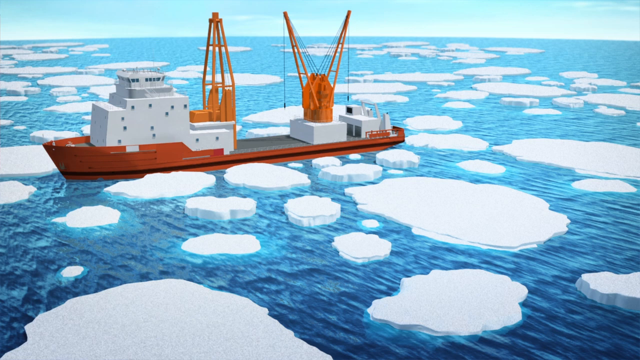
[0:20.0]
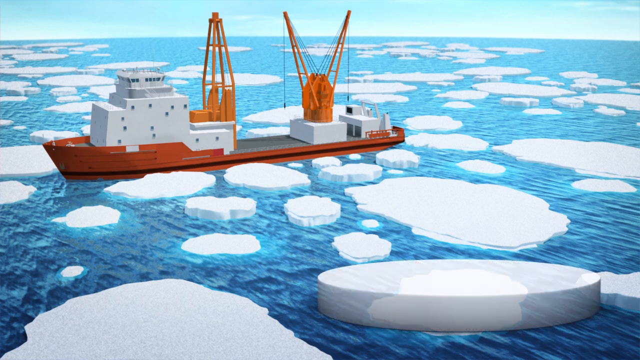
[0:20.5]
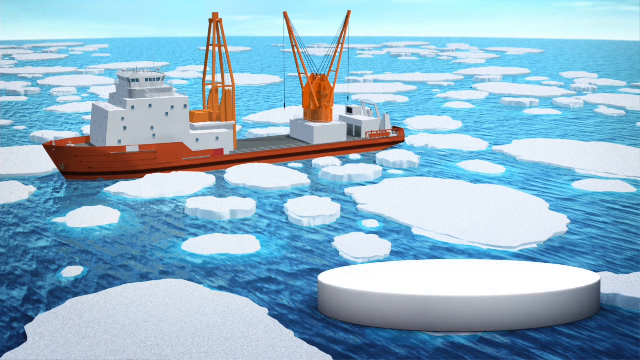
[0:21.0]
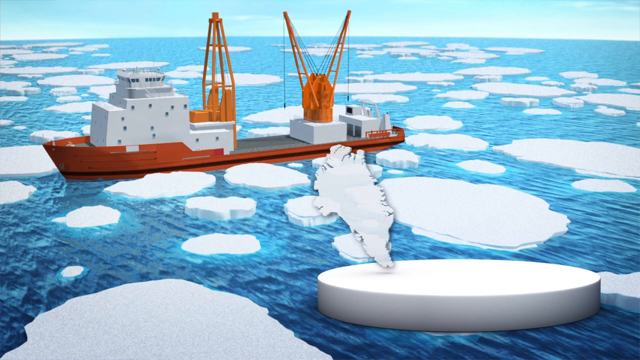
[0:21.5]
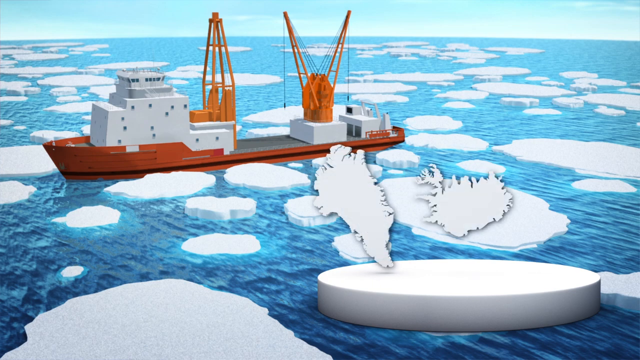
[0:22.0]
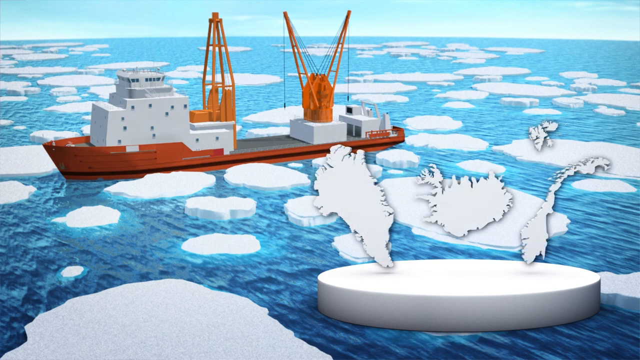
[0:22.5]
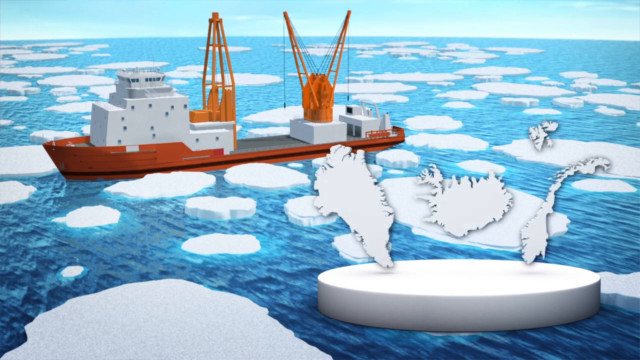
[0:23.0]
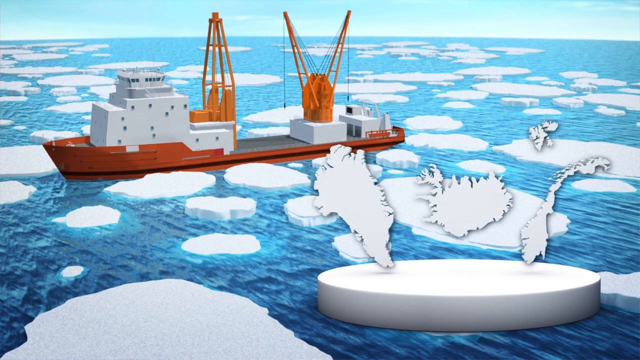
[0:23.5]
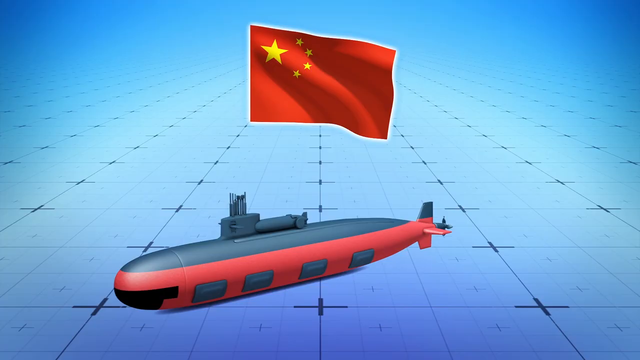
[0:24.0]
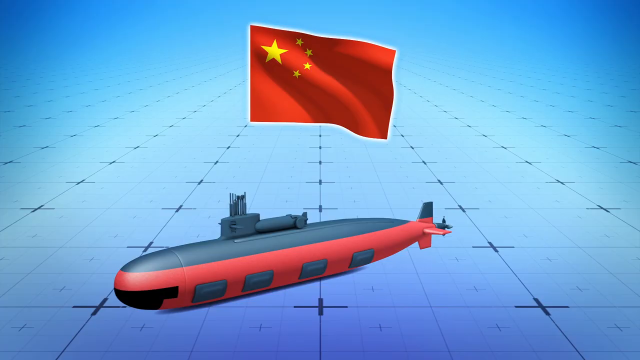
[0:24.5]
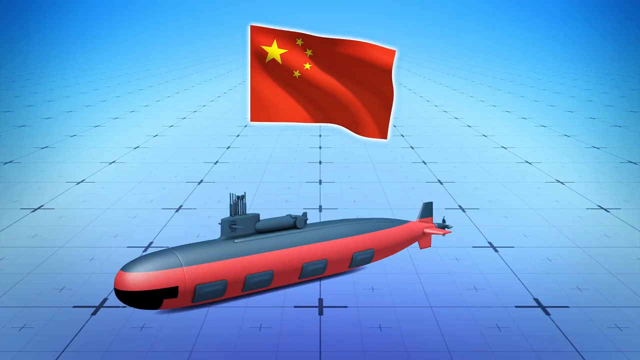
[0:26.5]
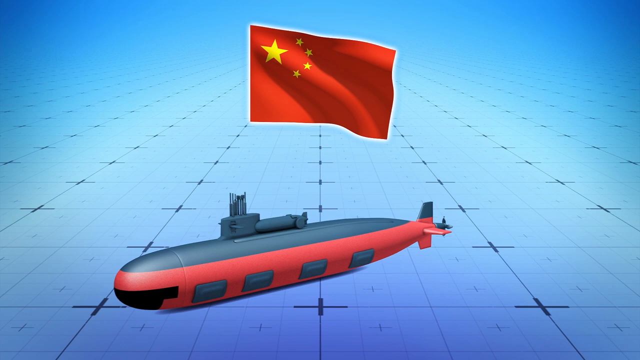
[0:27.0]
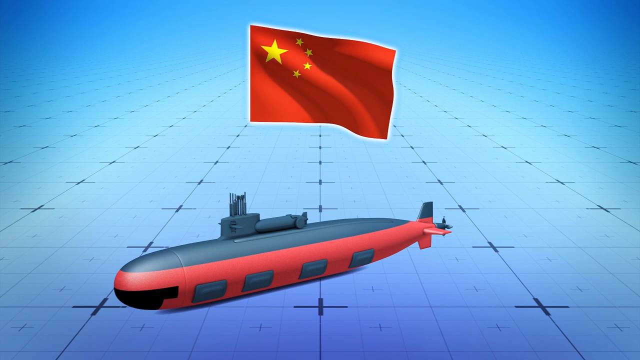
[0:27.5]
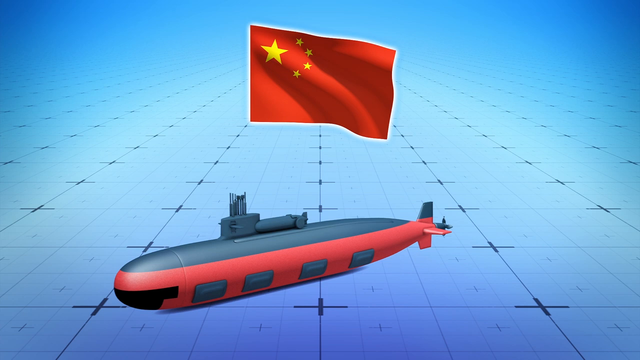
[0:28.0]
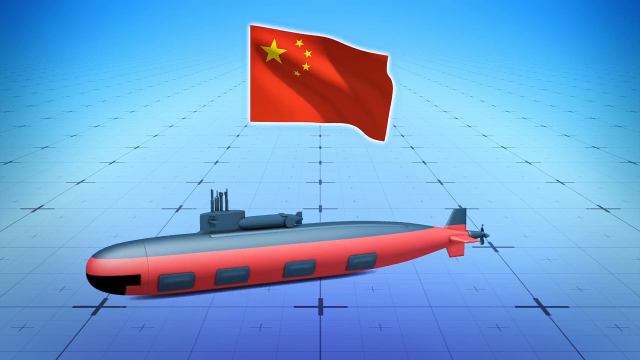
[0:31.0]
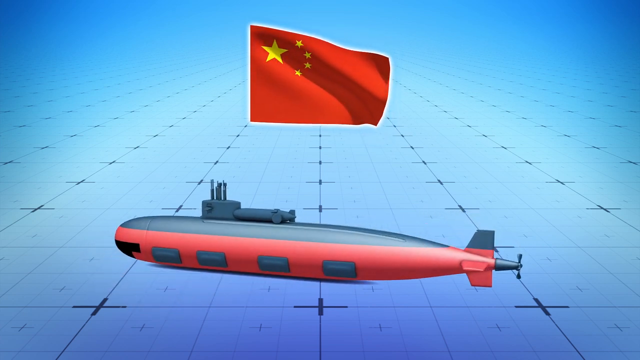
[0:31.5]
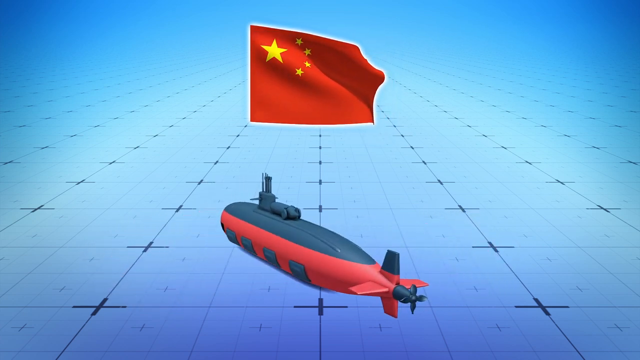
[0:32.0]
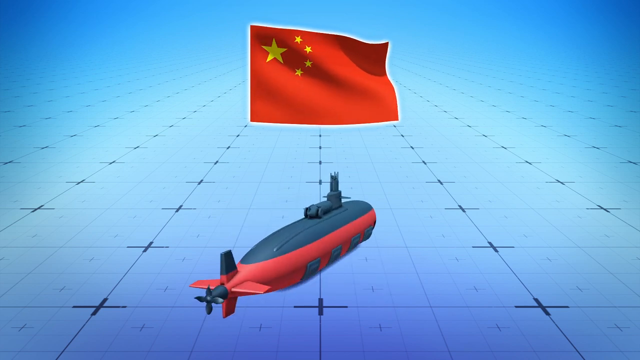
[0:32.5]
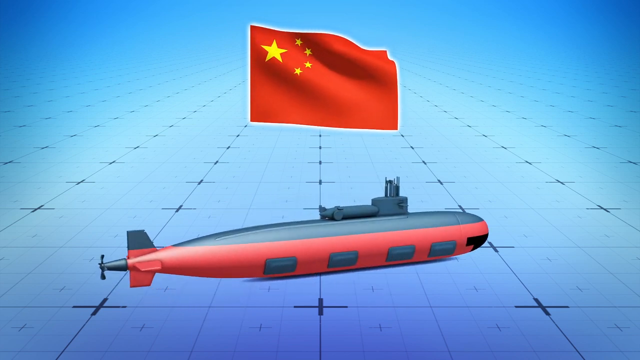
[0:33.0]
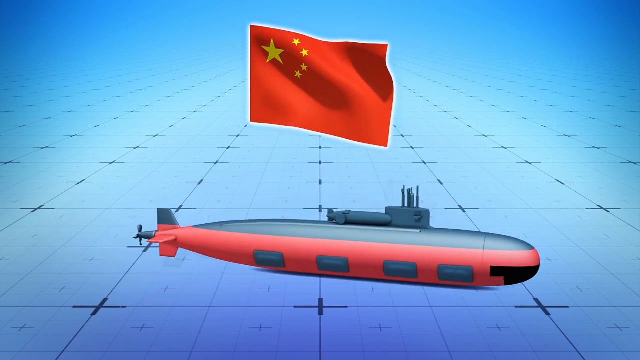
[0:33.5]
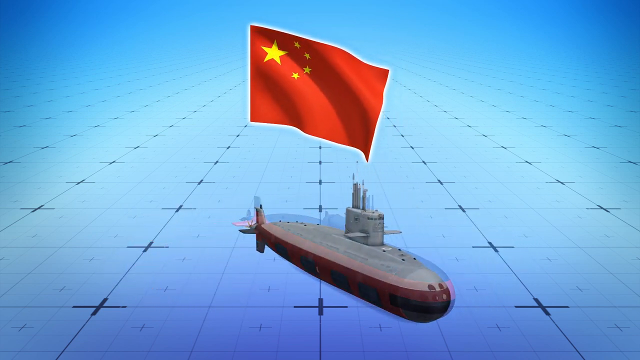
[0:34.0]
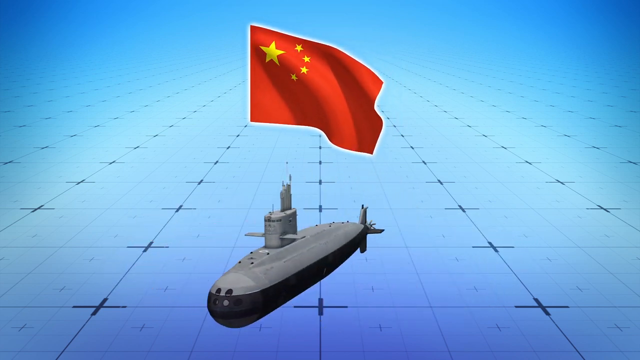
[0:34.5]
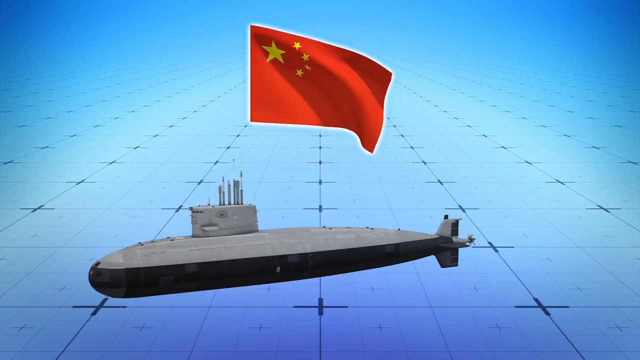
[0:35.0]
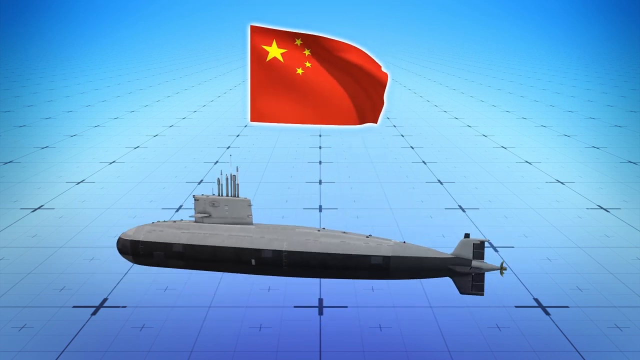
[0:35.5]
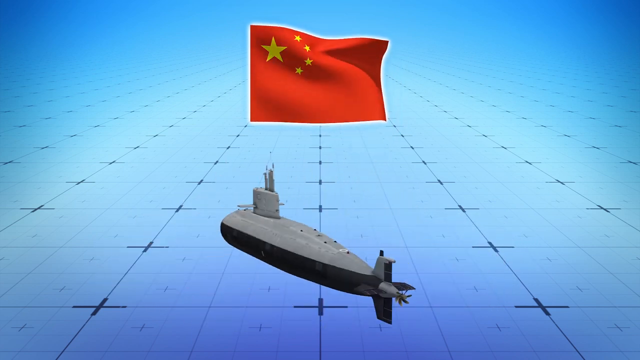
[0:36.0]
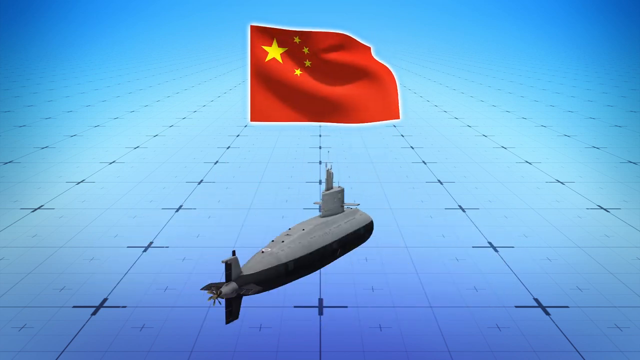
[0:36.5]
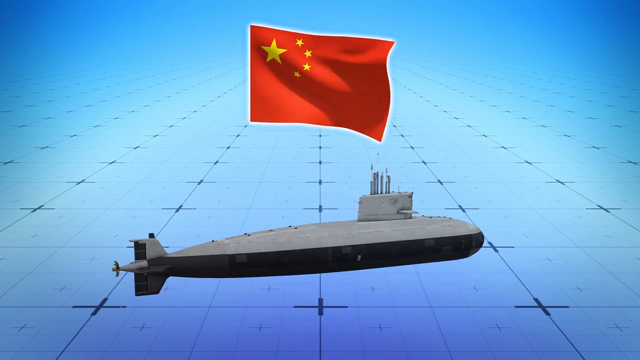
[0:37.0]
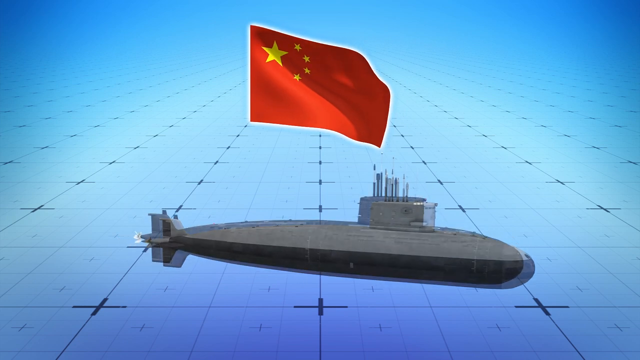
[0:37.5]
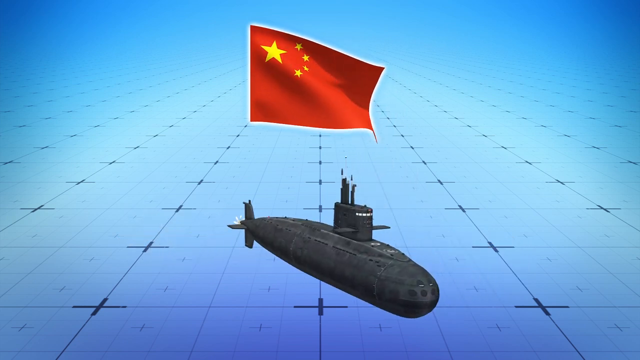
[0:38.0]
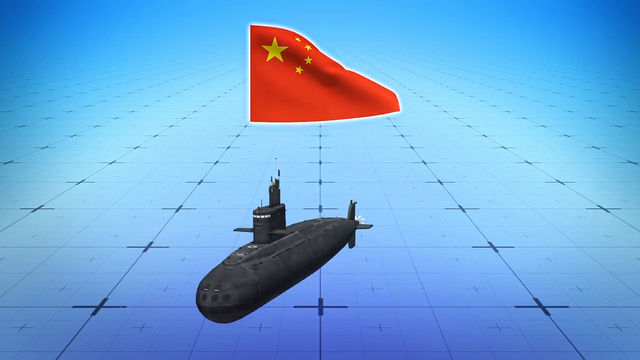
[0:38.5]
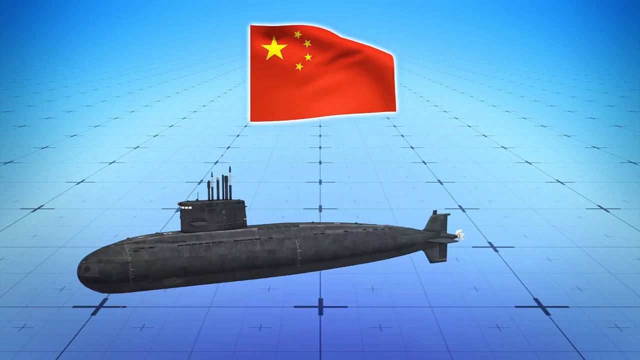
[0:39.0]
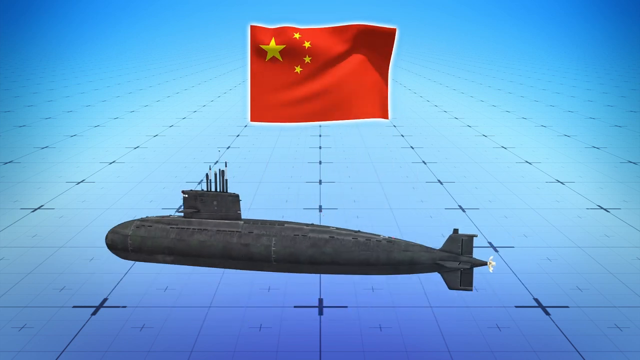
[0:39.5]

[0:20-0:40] Visuals appear on the screen with the cargo boat and the sea with icebergs around it. What seem to be pieces of land taken from a map appear in the bottom right corner on top of a circular stand, which is also white; there are four different pieces of land. The scene moves to another screen with a blue background and black crosses on the floor. At the bottom of the screen is what looks like a submarine, red and black, with black on the top, black windows, and red towards the bottom. The Chinese flag is on the screen, this time in the middle at the top. The submarine spins around in circles while the flag starts waving at the top of the screen. A different-looking submarine then appears, this one all black, very long and very thin, with a propeller at the back and something sticking out of its top.